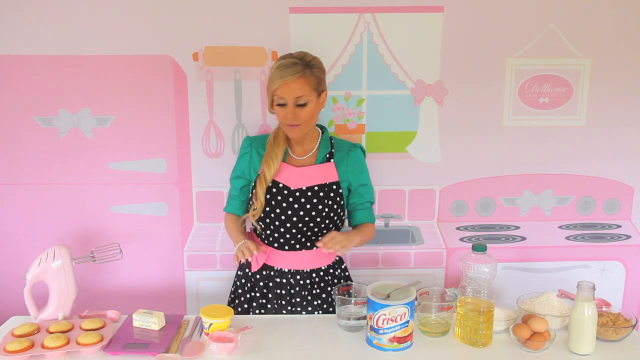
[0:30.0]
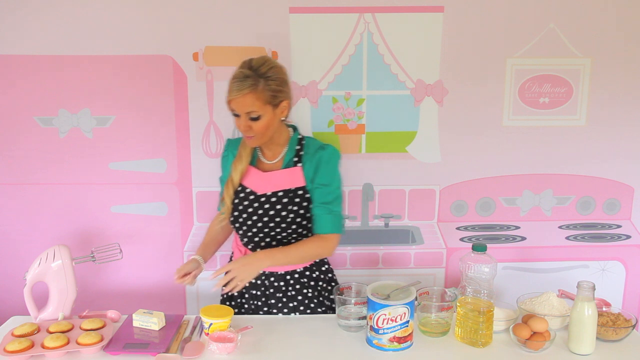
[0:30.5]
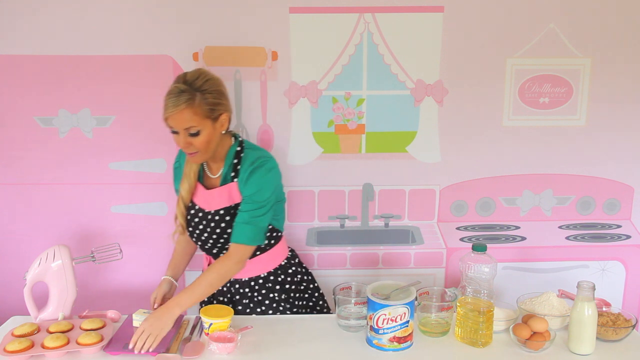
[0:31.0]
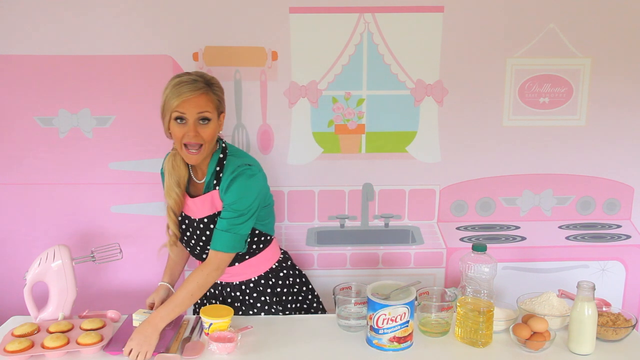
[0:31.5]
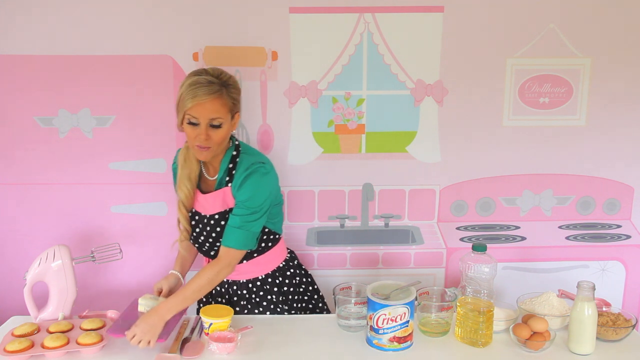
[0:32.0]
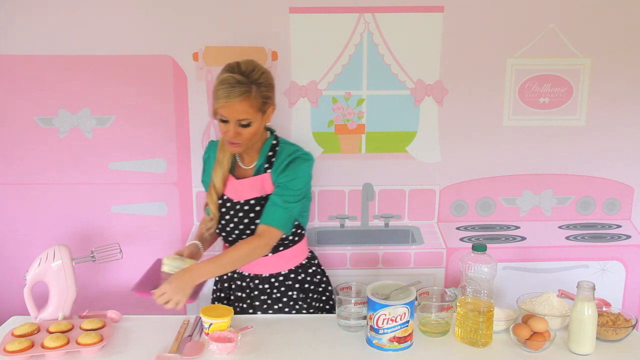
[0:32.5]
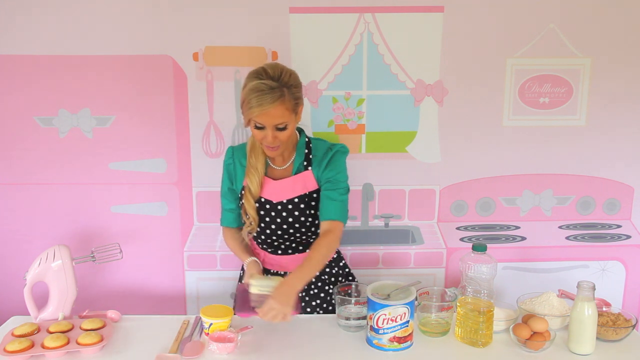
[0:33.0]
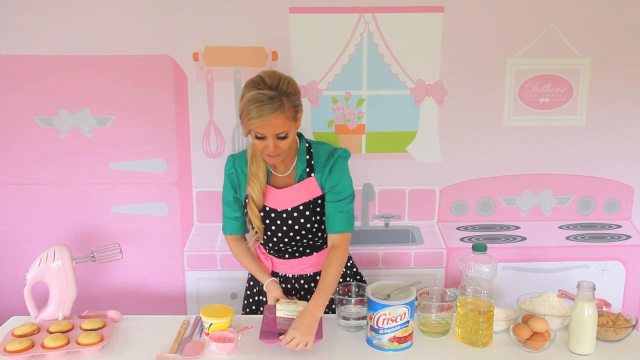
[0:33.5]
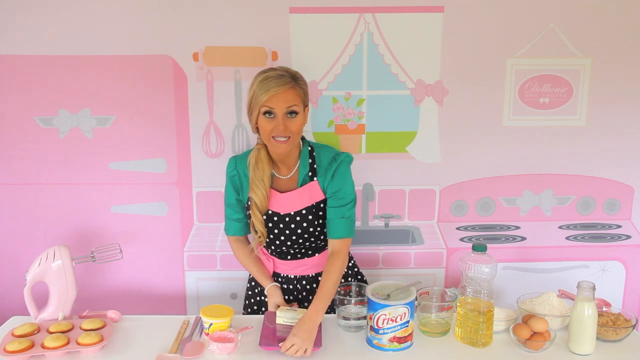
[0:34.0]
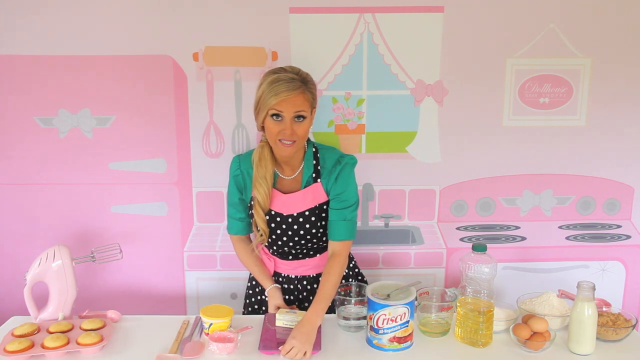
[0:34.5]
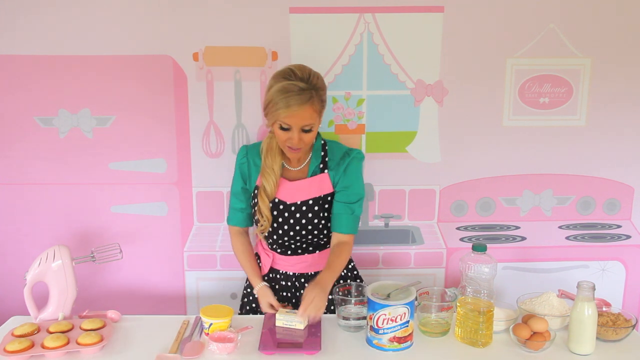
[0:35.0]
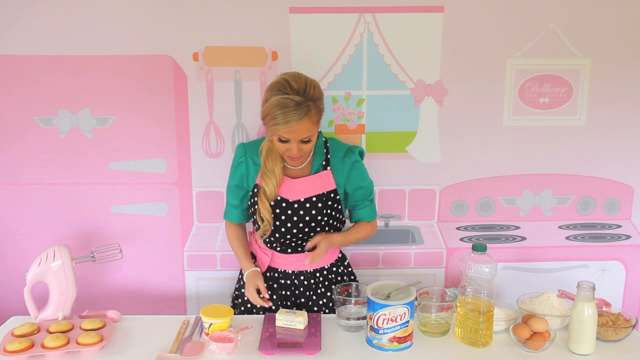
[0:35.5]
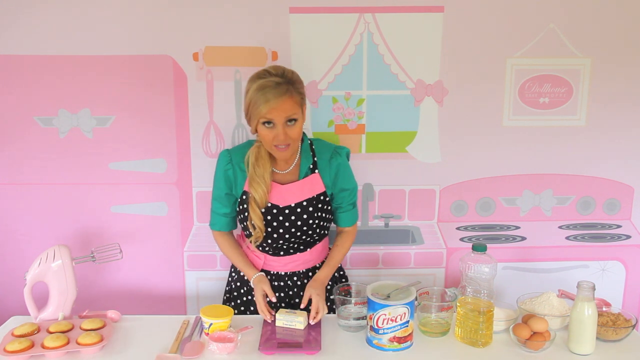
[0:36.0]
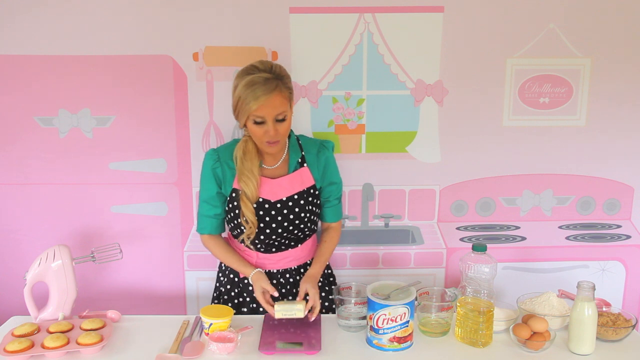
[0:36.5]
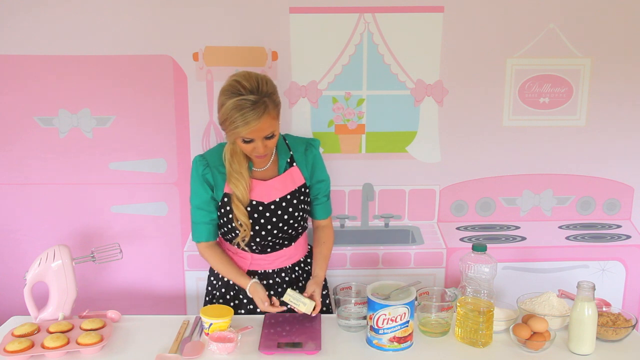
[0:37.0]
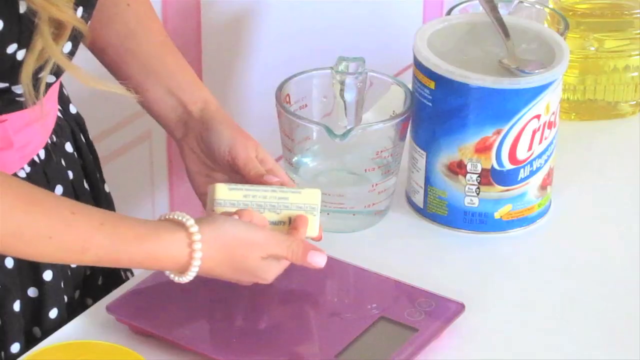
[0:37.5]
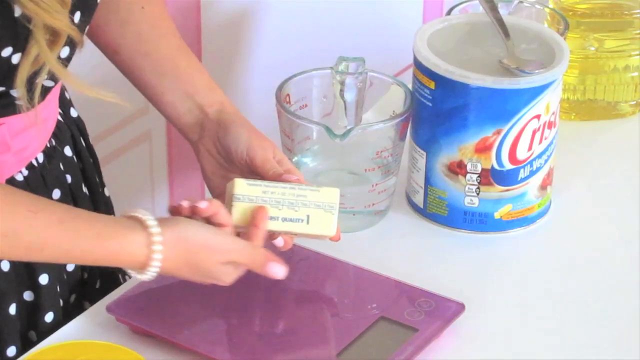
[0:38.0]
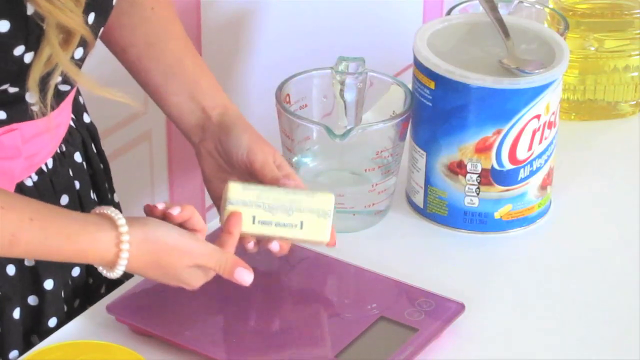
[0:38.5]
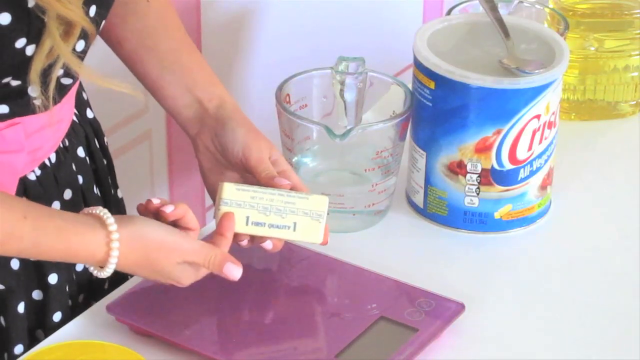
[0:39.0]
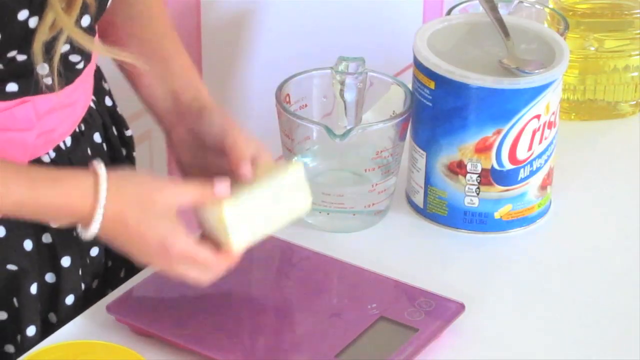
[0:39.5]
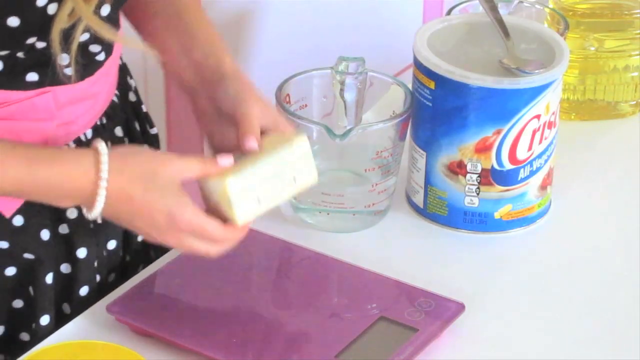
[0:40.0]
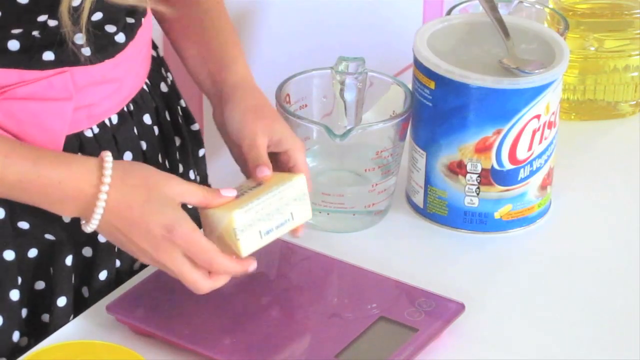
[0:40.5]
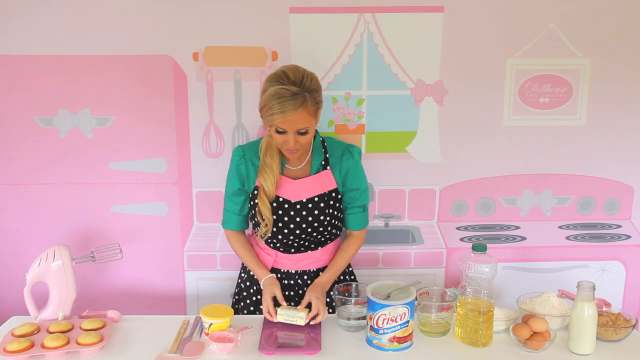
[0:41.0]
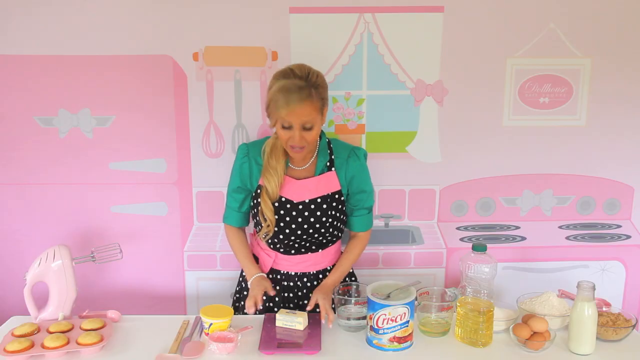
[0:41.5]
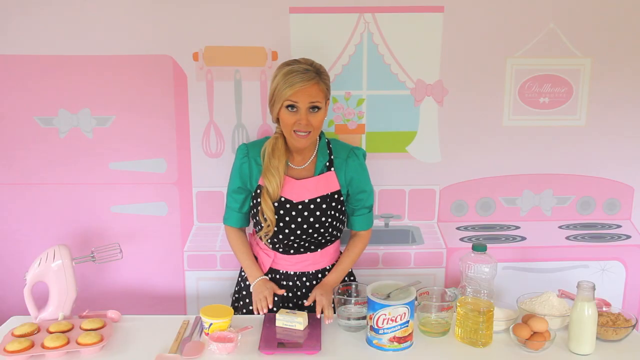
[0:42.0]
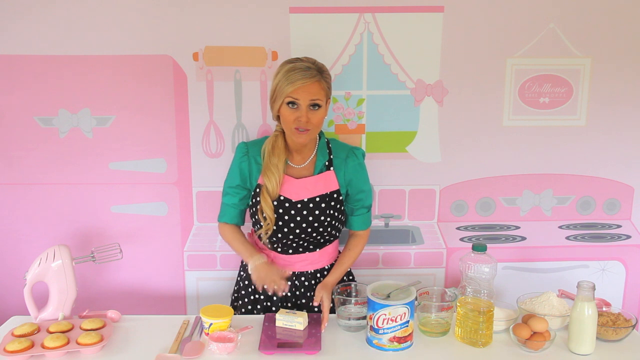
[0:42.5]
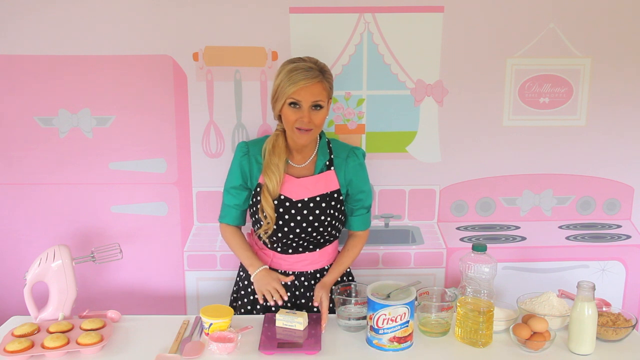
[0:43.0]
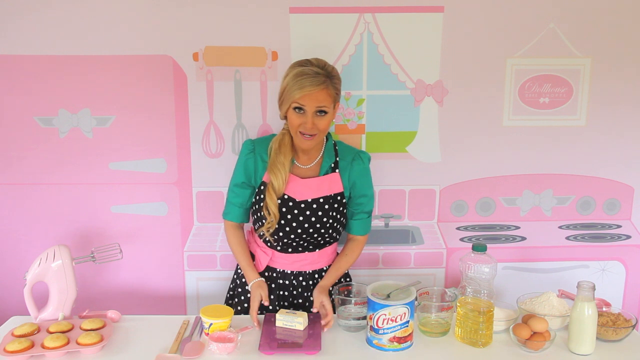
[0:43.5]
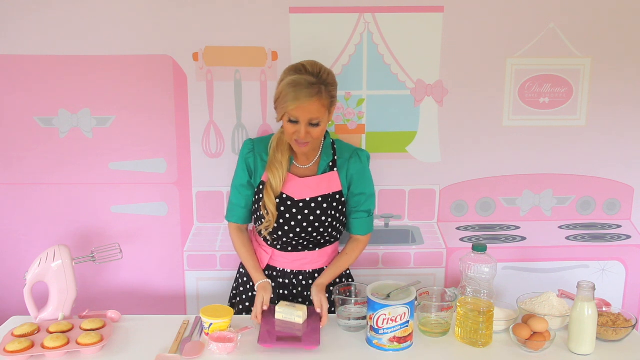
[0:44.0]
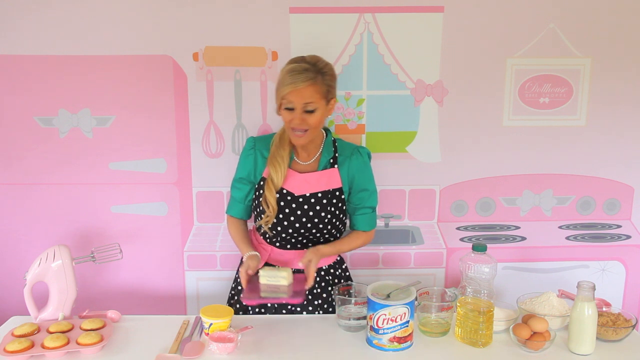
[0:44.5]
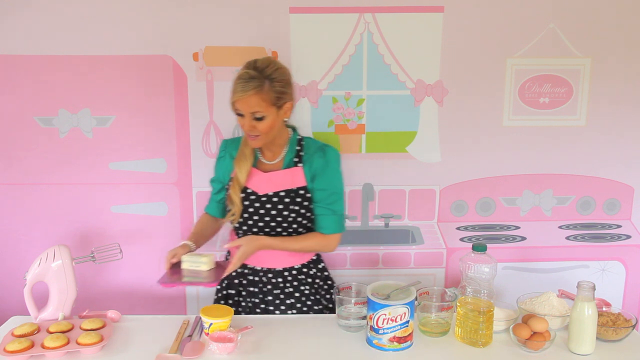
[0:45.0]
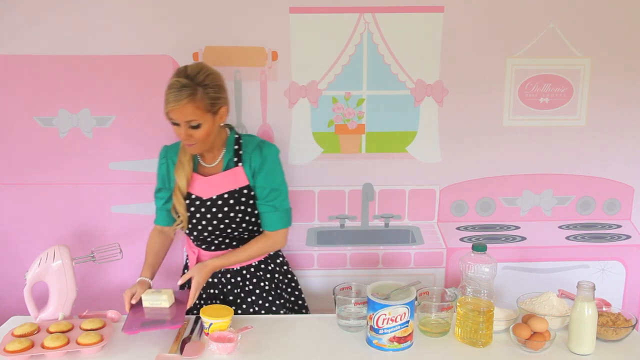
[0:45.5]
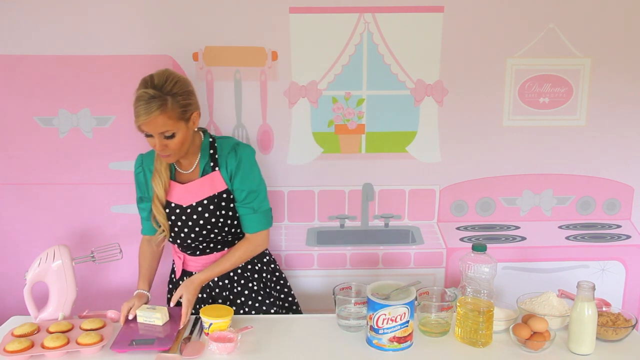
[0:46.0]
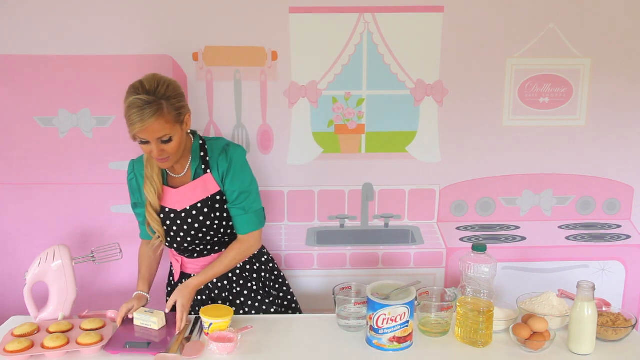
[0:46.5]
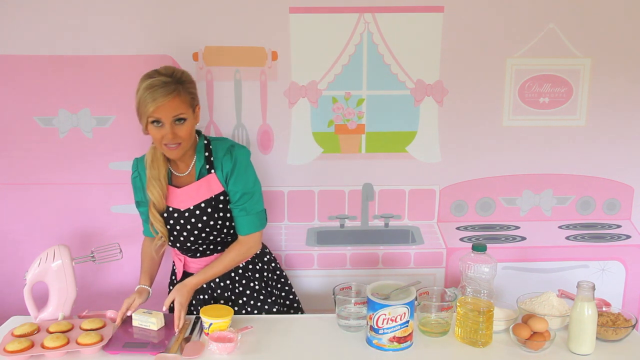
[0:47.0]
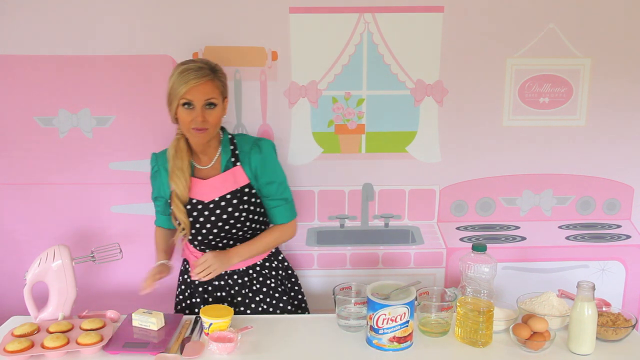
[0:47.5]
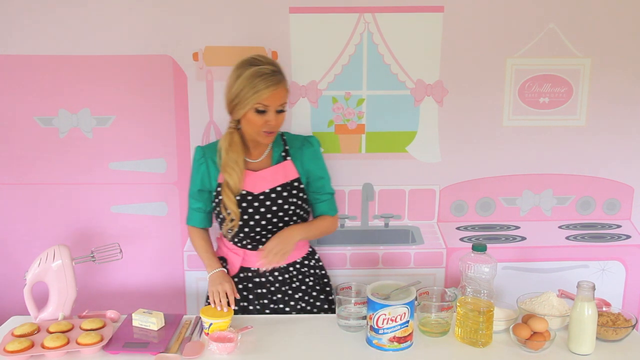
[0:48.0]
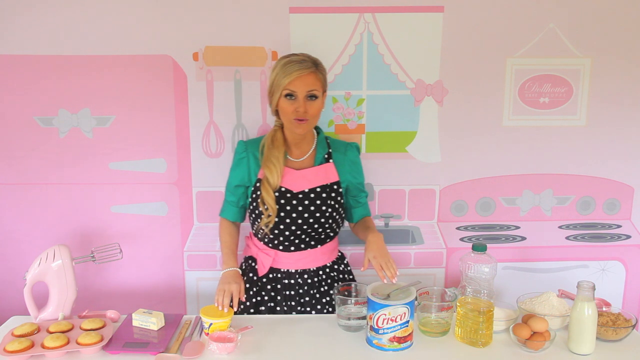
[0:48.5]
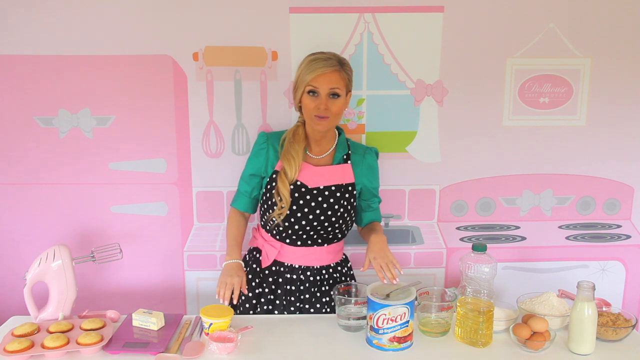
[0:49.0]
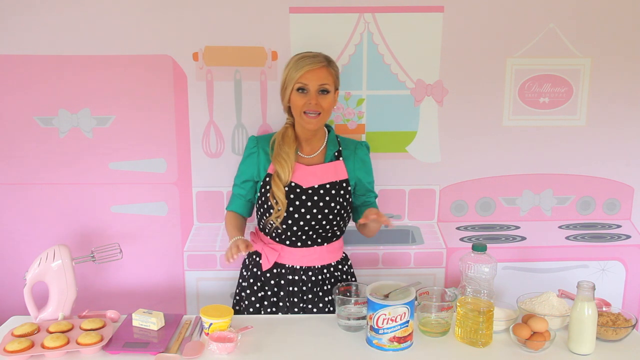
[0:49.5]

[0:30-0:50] The woman is in front of the camera, wearing a green t-shirt under her apron, busily handling and moving items around the kitchen. She picks up one of the plates seen earlier on her table, which seems to have butter on it, then lifts the cube of butter and seems to read out its ingredients as the camera zooms in on her hand. She wears a bracelet on her left hand. Holding the butter in her right hand, she points at the written words on it with the fingers of her left hand, continuing to do so for a while. She then sets the butter back on the plate and returns the plate to its place on the white kitchen table. Next she holds one of the big cans in front of her, which is blue and seems to have "Crisco" written on it in red.